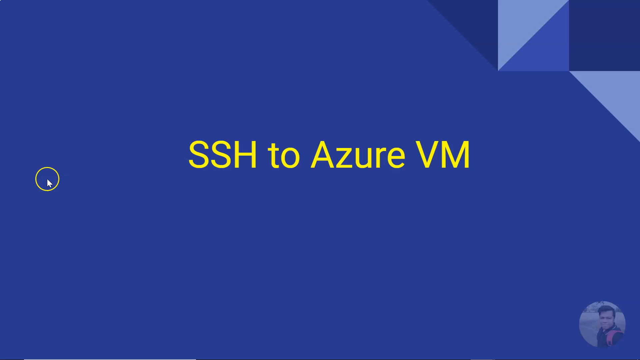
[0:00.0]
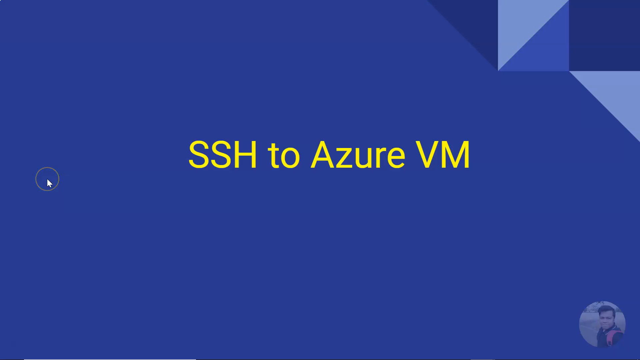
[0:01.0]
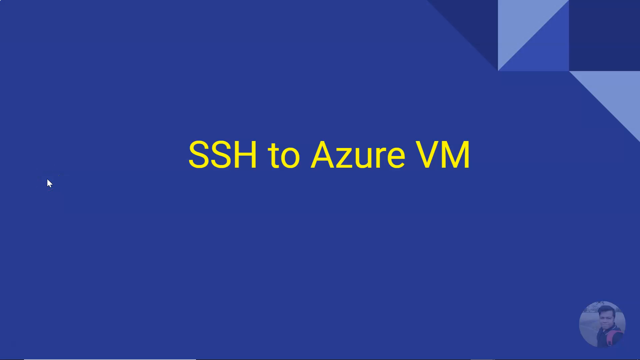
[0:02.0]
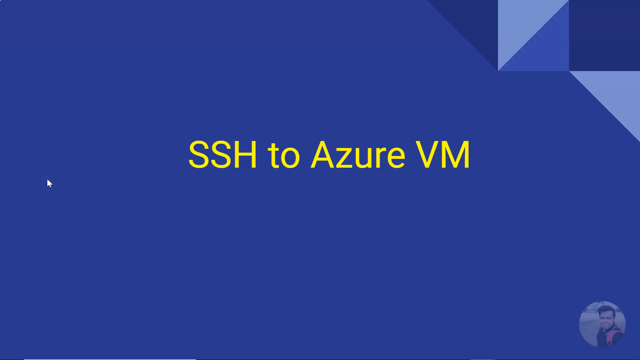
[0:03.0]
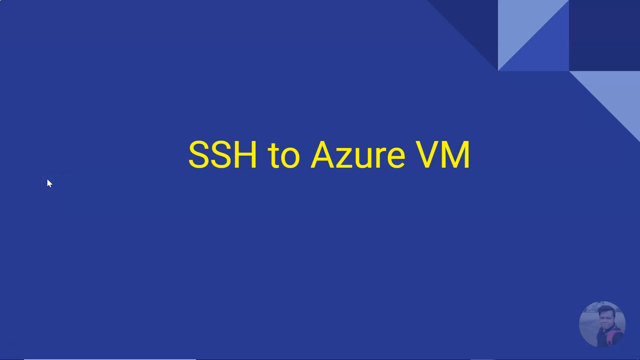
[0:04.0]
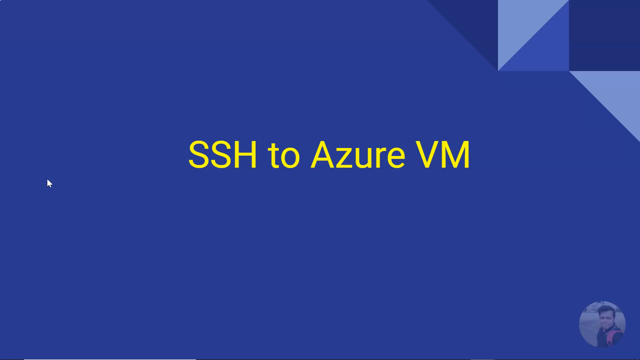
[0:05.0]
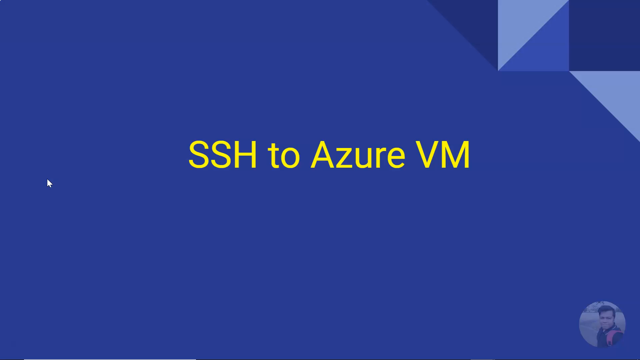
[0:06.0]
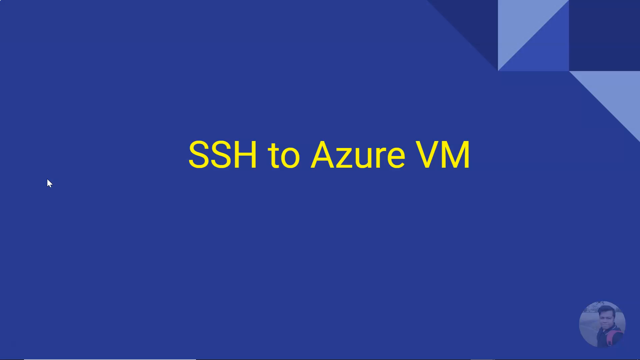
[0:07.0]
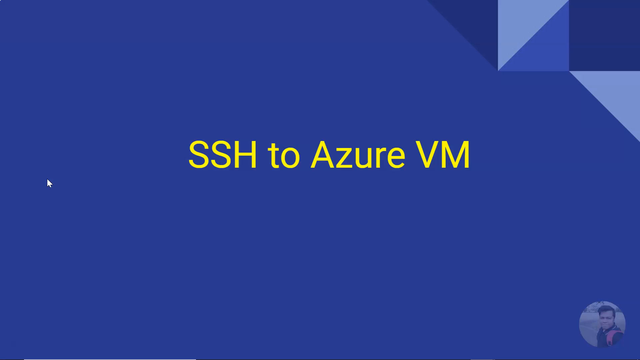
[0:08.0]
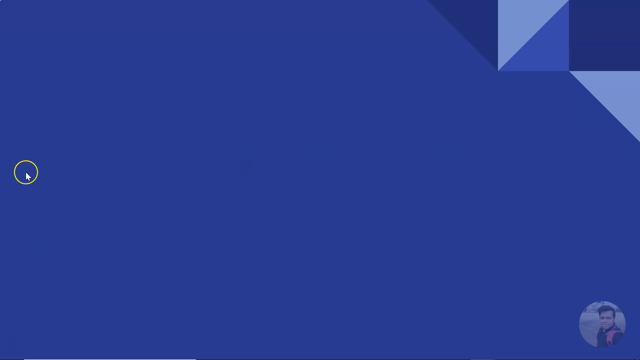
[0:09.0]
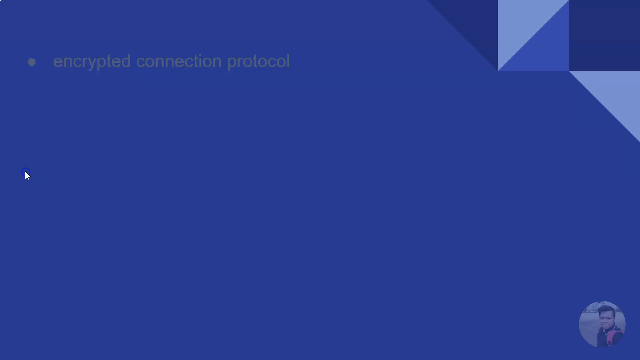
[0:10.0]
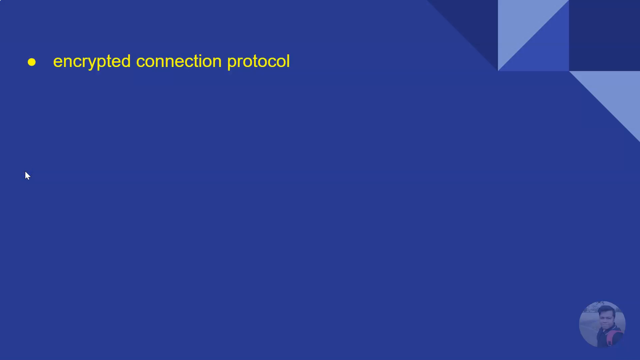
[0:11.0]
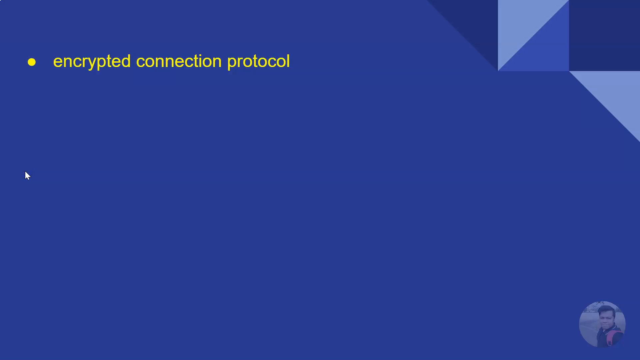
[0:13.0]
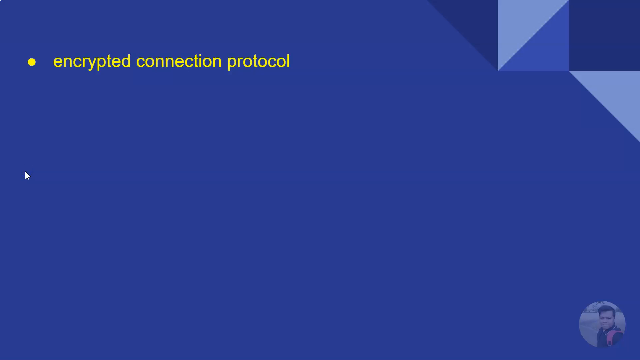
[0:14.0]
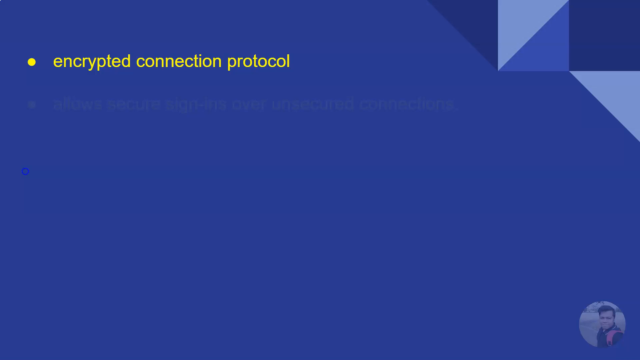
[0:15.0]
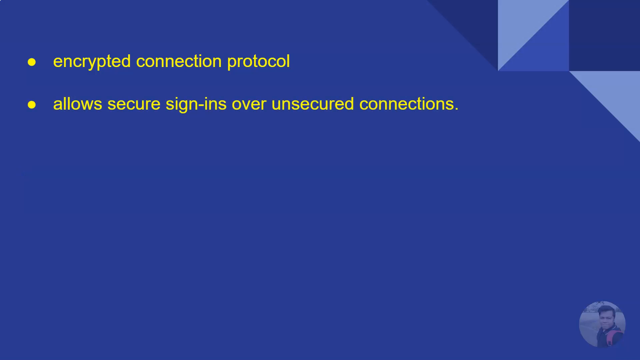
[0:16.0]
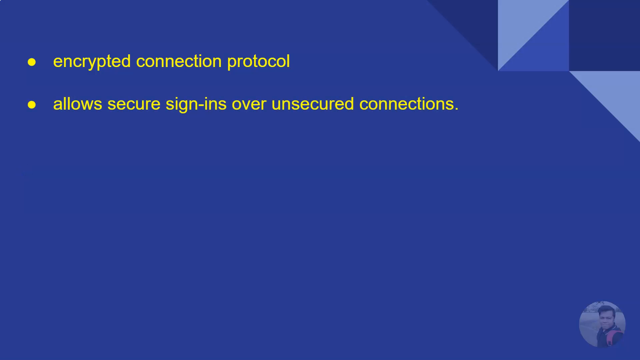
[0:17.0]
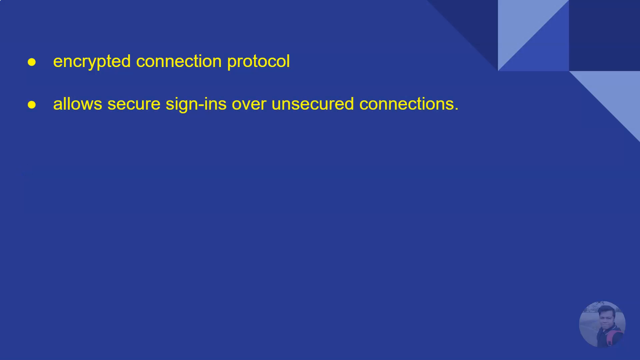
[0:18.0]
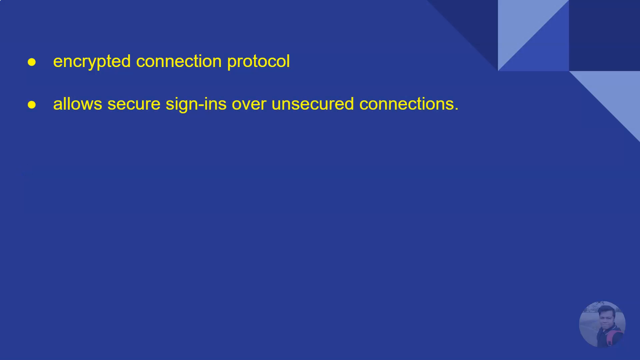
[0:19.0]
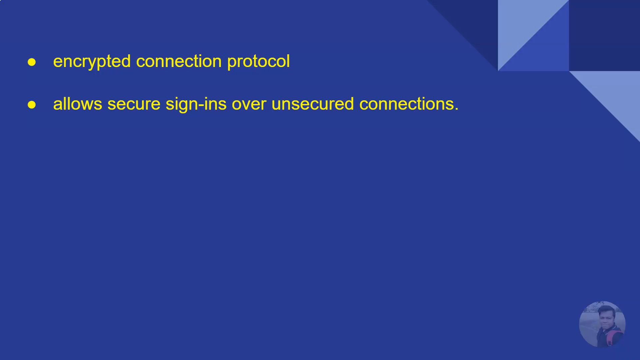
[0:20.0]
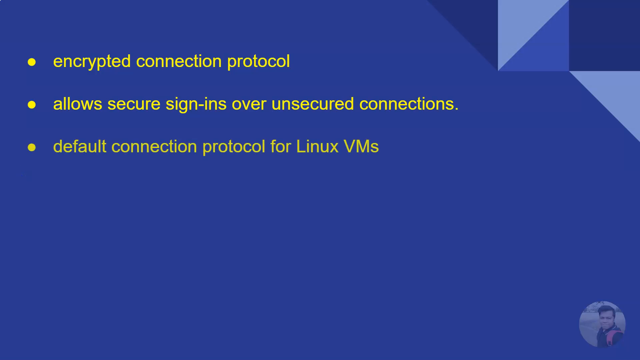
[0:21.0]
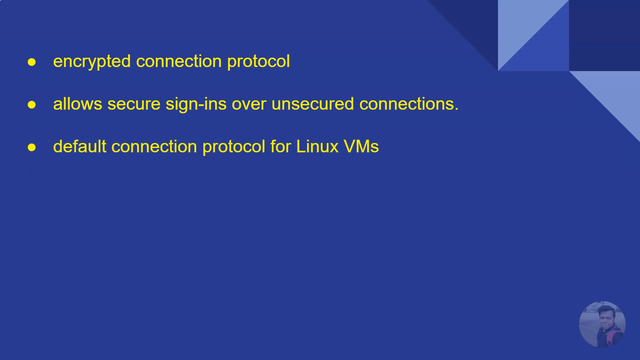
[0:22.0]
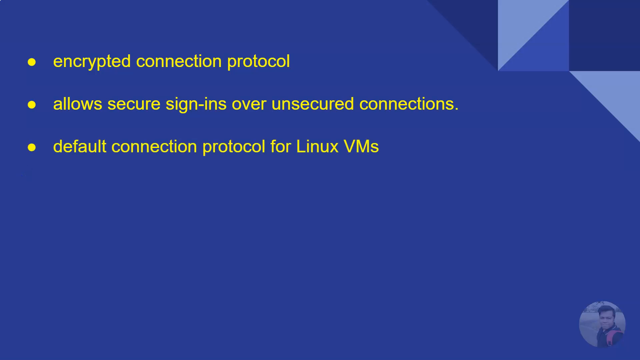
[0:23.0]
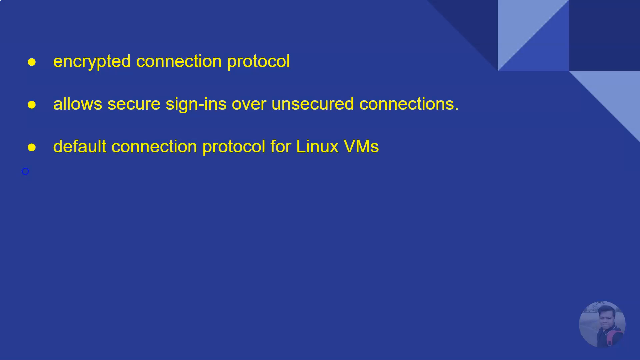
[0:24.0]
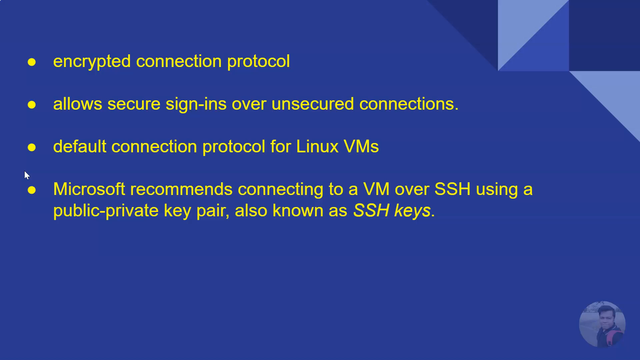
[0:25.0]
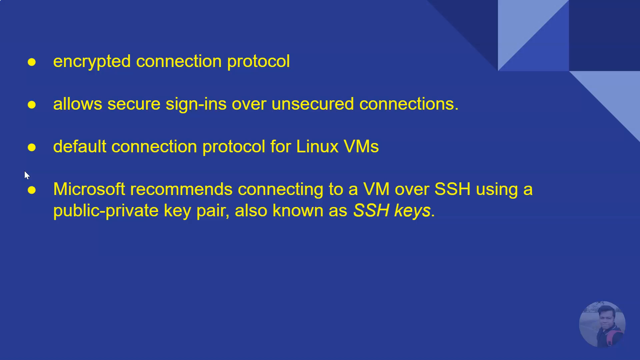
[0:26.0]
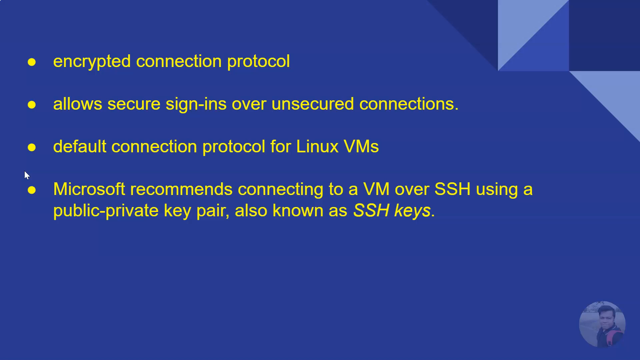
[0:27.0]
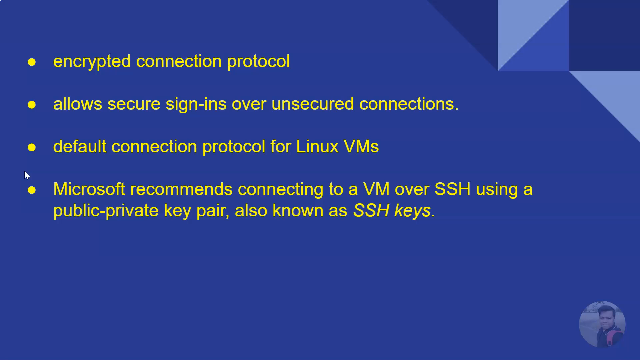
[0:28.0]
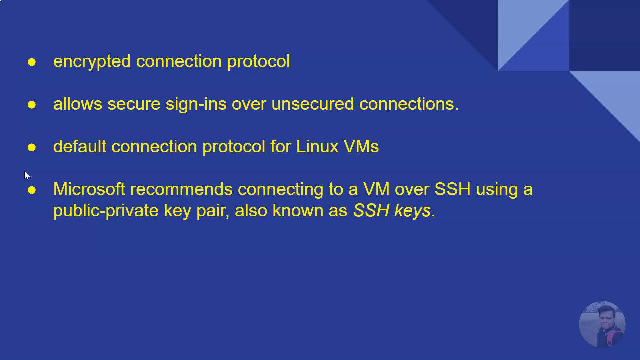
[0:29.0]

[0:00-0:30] A dark blue background has triangle designs in the right corner in a darker blue and a very light shade of blue. In the middle of the screen, bold yellow letters read "SSH to Azure VM". In the bottom right corner is what looks like an avatar image in a circle frame; it appears to be a young Indian man with dark brown hair, seemingly taking a selfie outside. The cursor, a white arrow with a small thin yellow circle around it, clicks on the left side of the page. A bullet point pops up in the top left corner in yellow font reading "Encrypted connection protocol". The next bullet point appears underneath it: "Allow secure sign-ins over unsecured connections". The third bullet point reads "Default connection protocol for Linux VMs", and the fourth reads "Microsoft recommends connecting to a VM over SSH using a public-private key pair, also known as SSH keys".